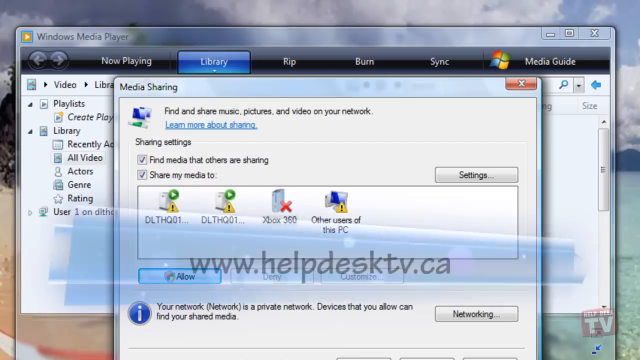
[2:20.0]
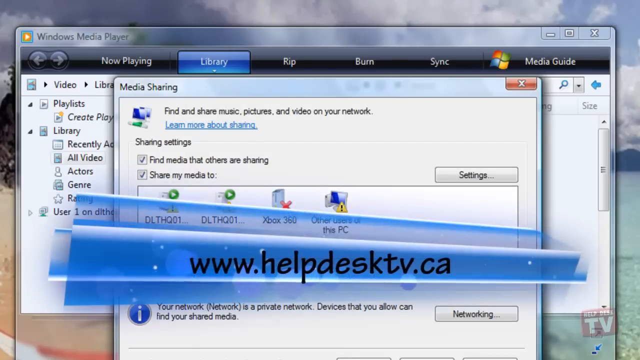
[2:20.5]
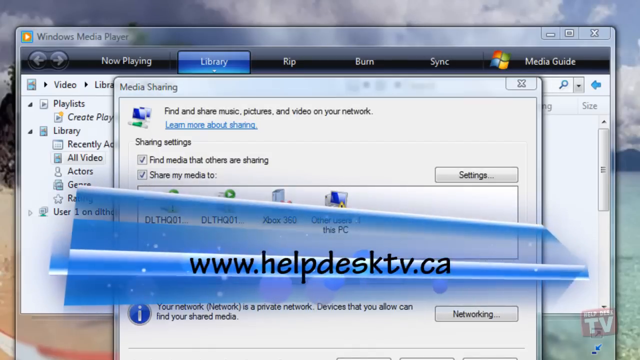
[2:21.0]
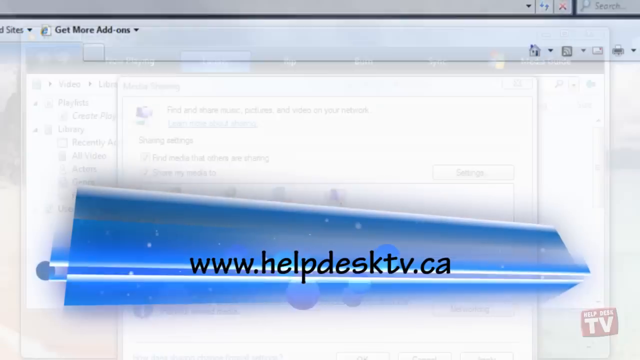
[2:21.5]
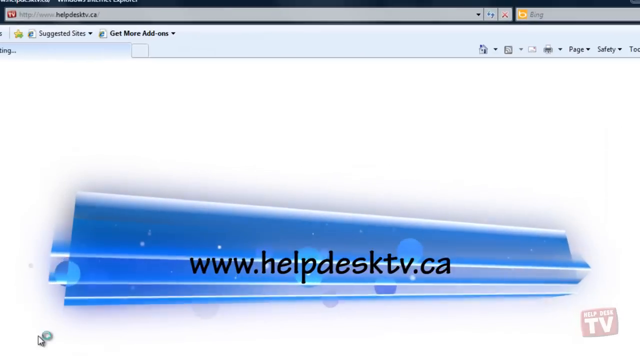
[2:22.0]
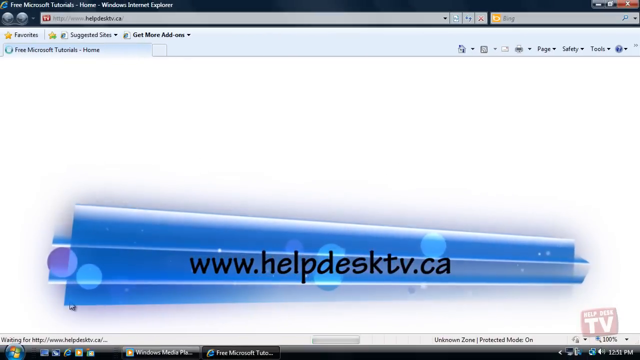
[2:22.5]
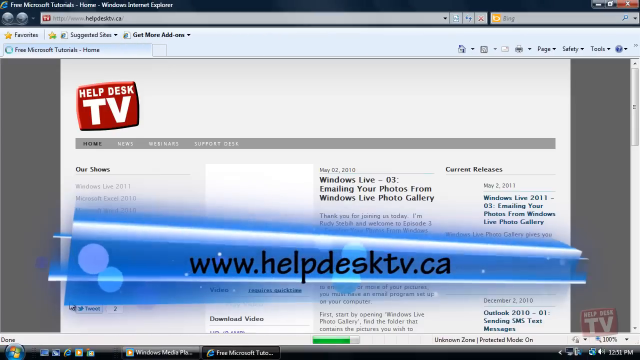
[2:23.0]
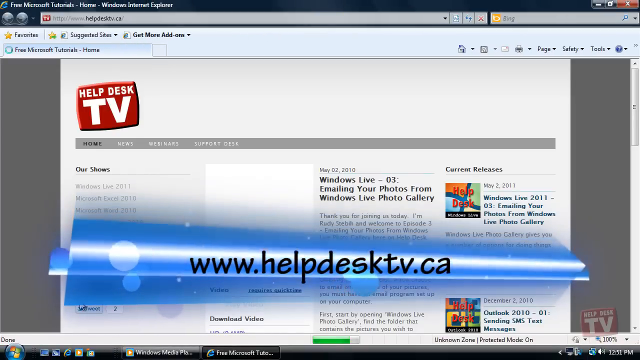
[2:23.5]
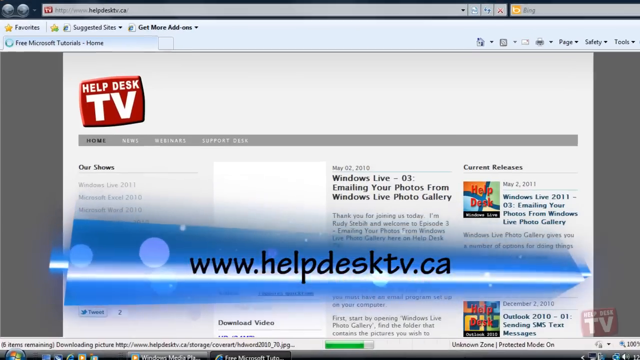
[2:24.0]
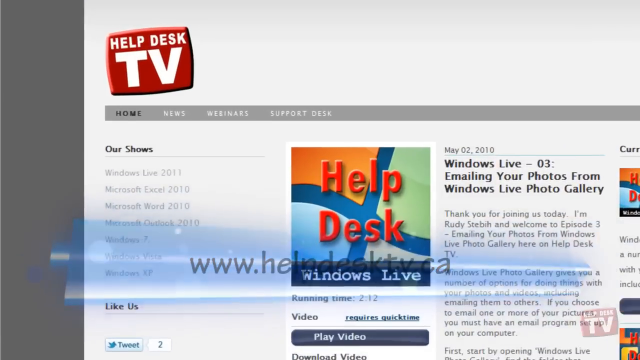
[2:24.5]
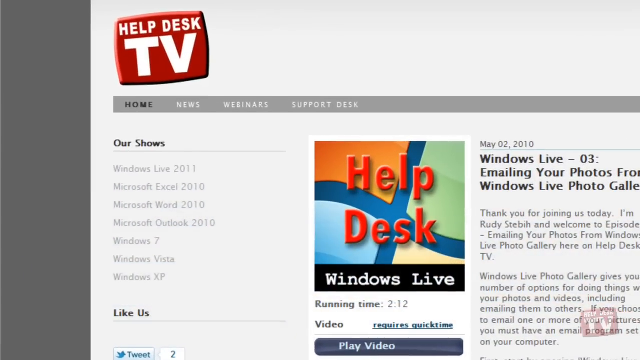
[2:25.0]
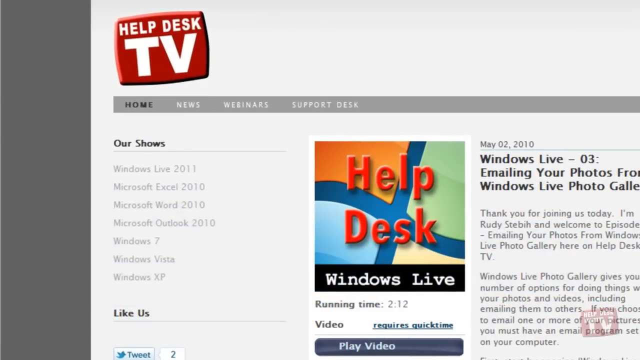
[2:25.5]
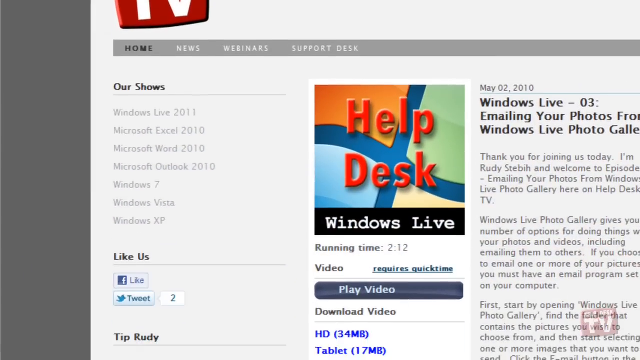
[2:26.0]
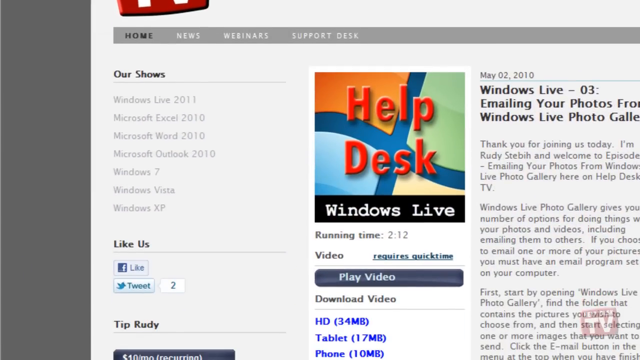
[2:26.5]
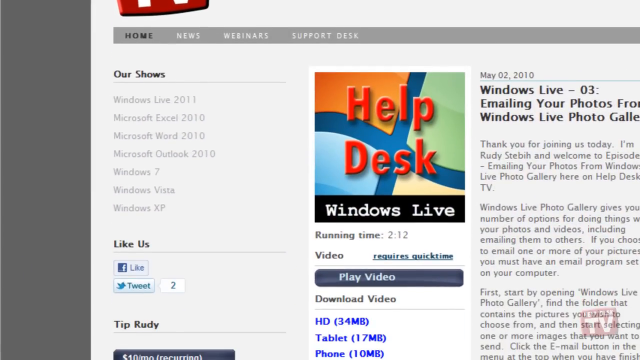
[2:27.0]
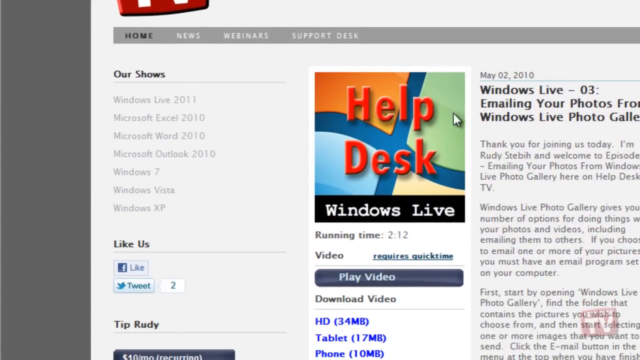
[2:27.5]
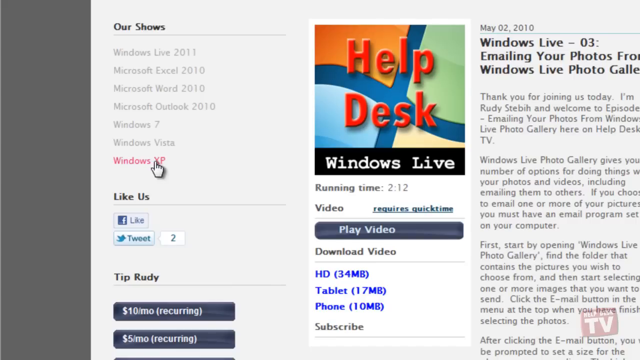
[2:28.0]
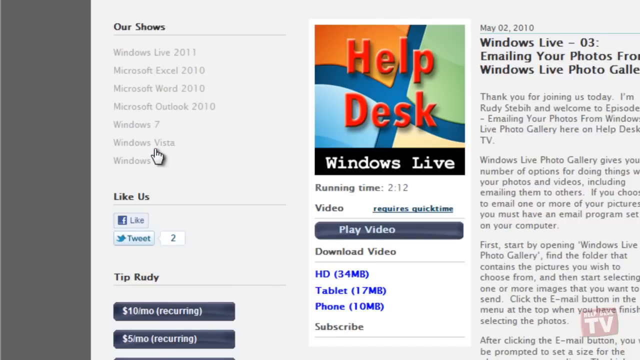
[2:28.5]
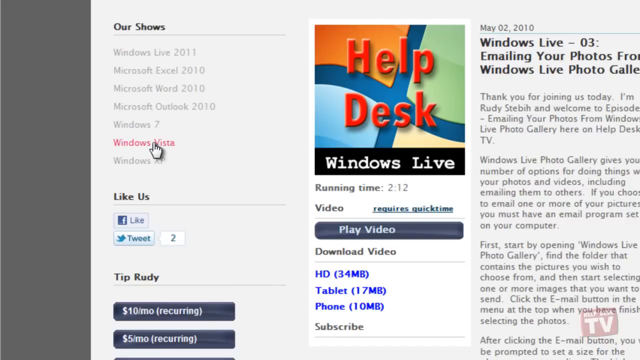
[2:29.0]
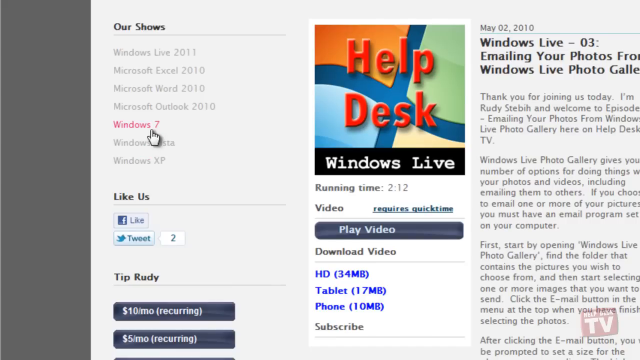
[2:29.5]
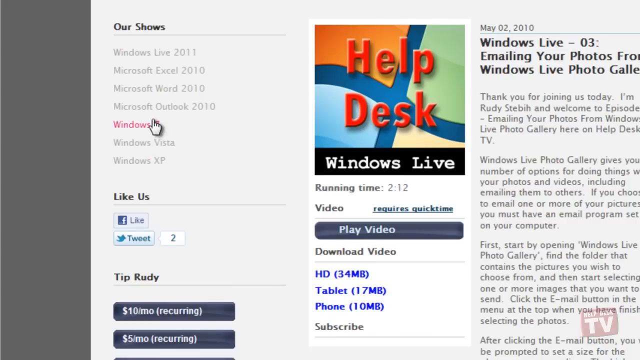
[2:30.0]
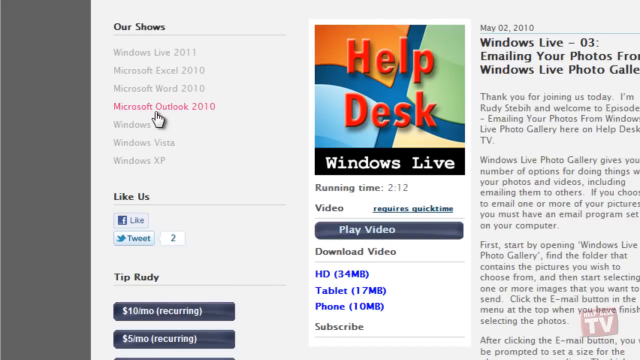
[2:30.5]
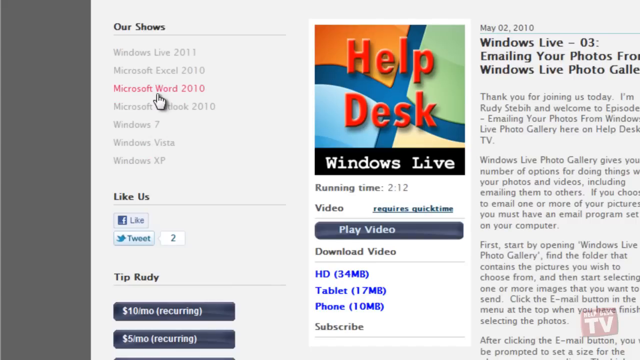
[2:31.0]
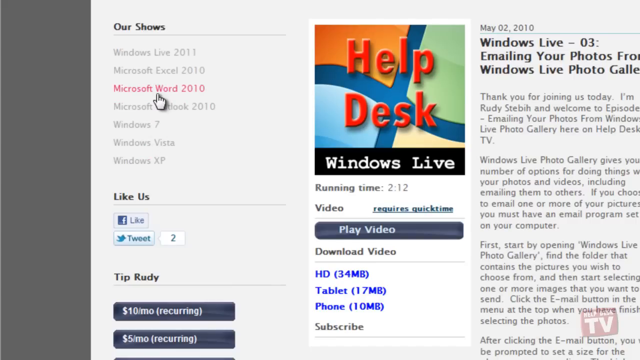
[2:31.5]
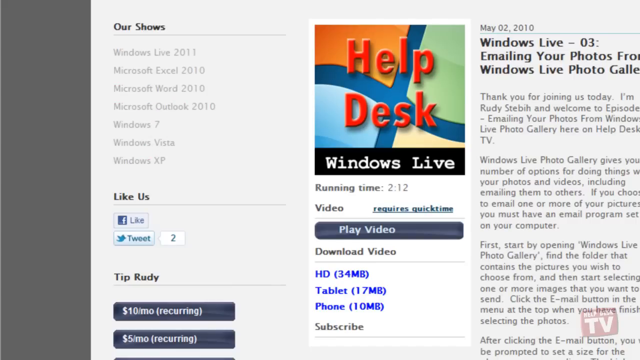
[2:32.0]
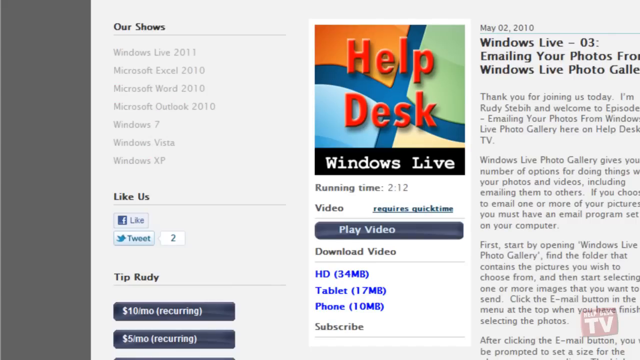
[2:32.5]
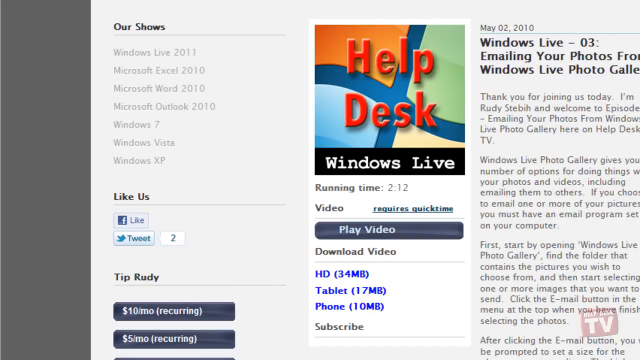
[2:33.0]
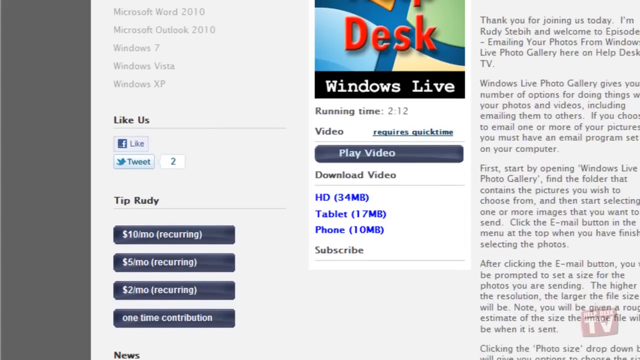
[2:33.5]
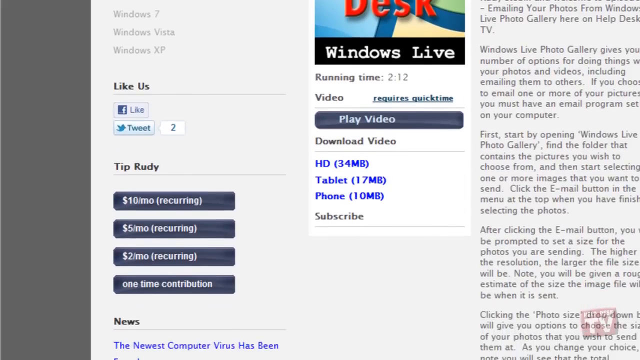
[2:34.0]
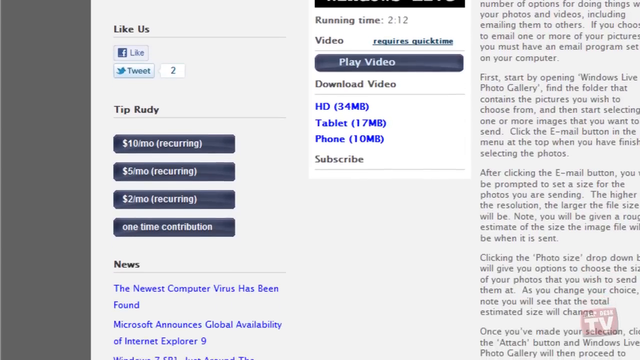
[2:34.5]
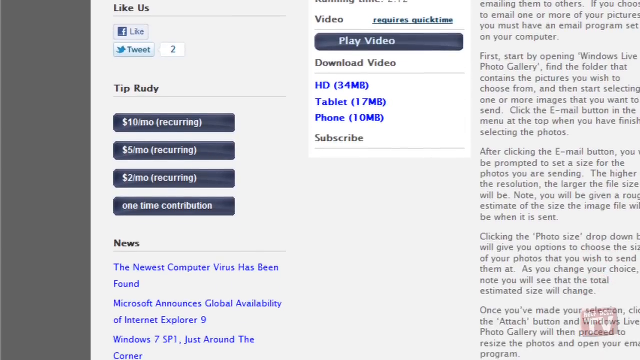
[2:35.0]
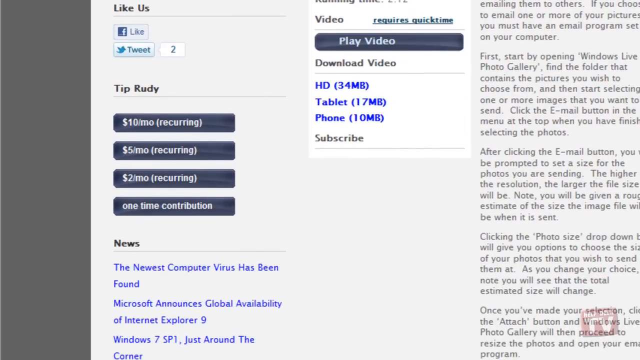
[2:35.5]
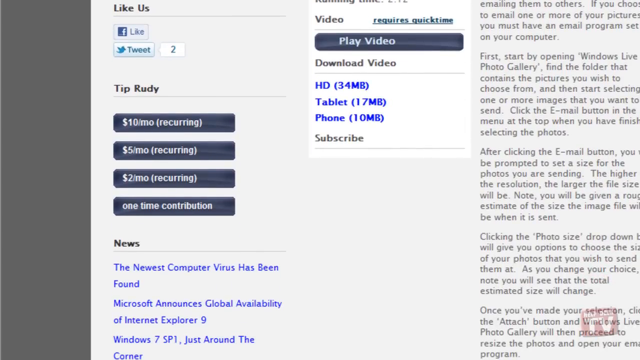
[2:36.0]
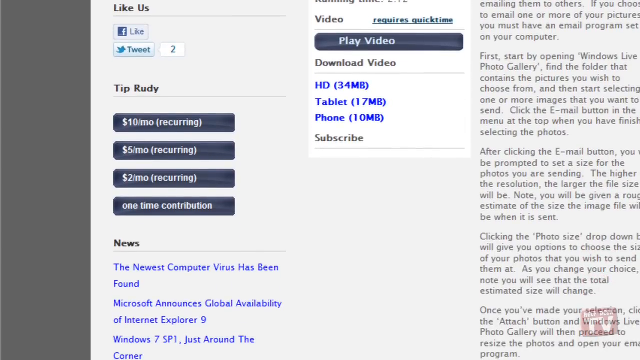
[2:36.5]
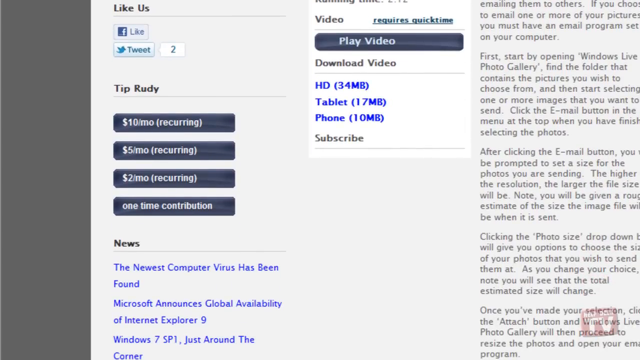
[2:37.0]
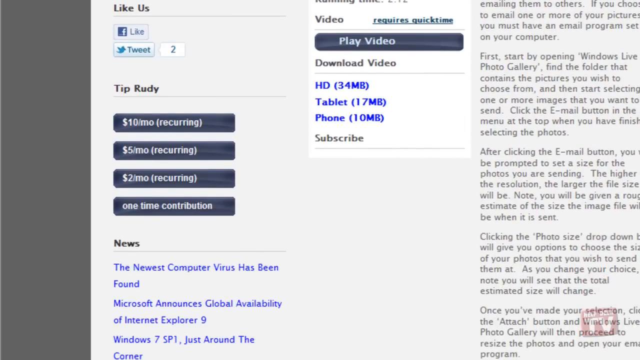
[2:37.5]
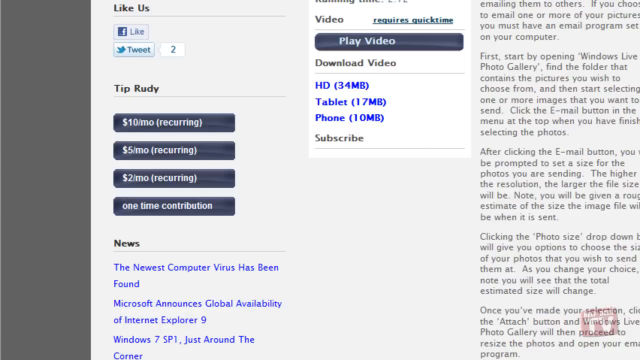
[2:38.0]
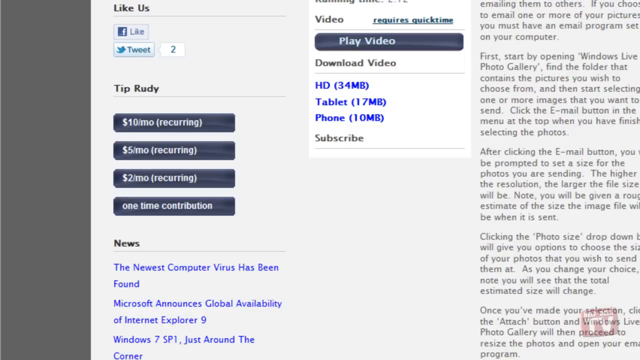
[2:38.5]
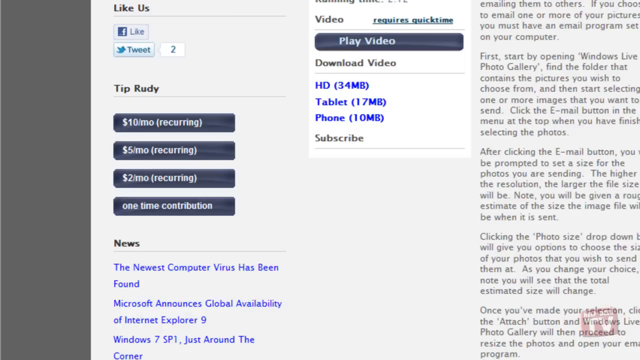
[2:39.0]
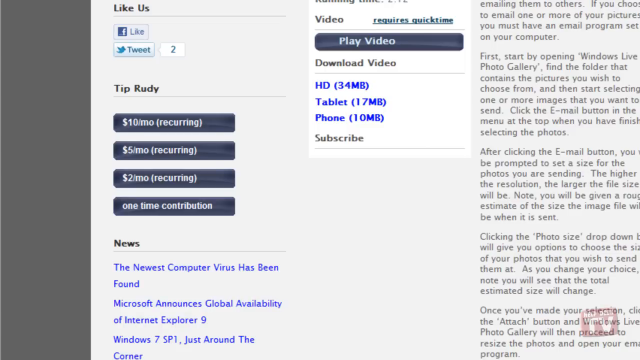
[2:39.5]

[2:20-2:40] The wavy blue banner appears in the front layer of the screen, a banner like the one that showed up in the middle of the page on the introduction. It lists a website in black font, "www.helpdesktv.ca". The banner is somewhat animated and looks wavy, with some stars and some circles moving around on it. In the background, another window pops up covering the full screen, with "free Microsoft tutorials home" at the very top; it looks like the website for www.helpdesktv.ca. In the top left corner of the web page is an icon: a red square, sort of tilted, with white text saying "help desk TV", which looks like the logo. Beneath it is a gray banner with the menu "home", "news", "webinars" and "support desk". Some articles are listed on the right-hand side of the page and a menu of "our shows" is on the left-hand side. He zooms in on the left side and starts scrolling down, and the cursor shows the different versions of Windows and Microsoft programs he has shows for: Windows Live 2011, Microsoft Excel 2010, Microsoft Word 2010, Microsoft Outlook 2010, Windows 7, Windows Vista and Windows XP. There is a Facebook like button and a Twitter tweet button, with a small 2 beside it indicating that two people tweeted it. Toward the bottom, below that menu, is an option that says "tip Rudy", offering to send money at $10 a month or $5 a month recurring. He moves the cursor over the shows listed, highlighting Microsoft Word, Windows 7 and Windows Vista, then scrolls a little further down to highlight the tipping options: $10 a month, $5 a month, $2 a month, and a one-time contribution. At the very bottom on the left side is a news section with linked news articles.